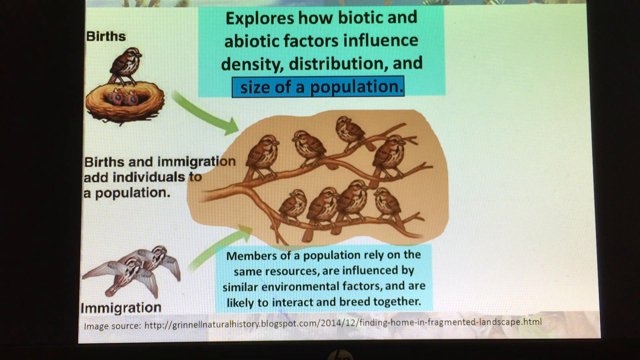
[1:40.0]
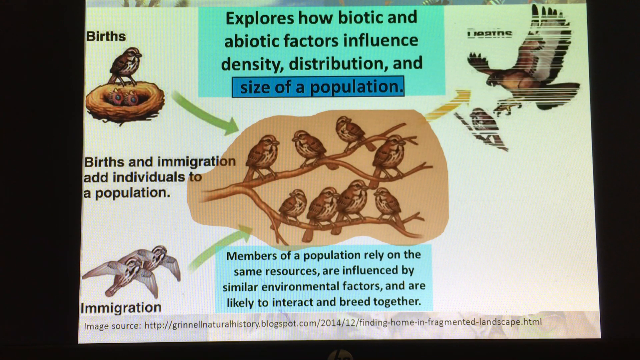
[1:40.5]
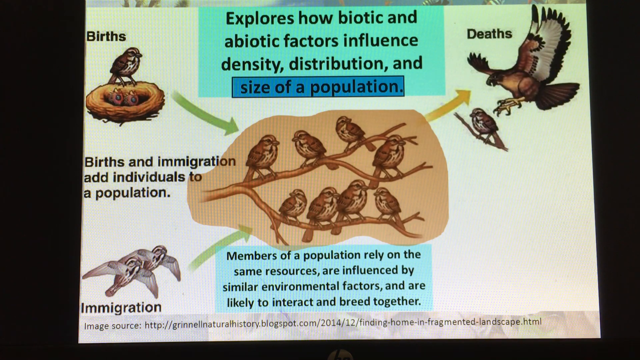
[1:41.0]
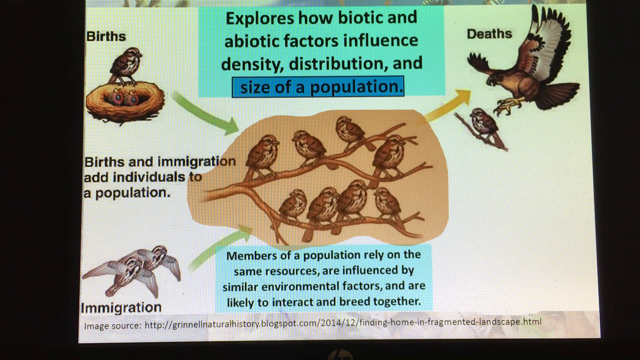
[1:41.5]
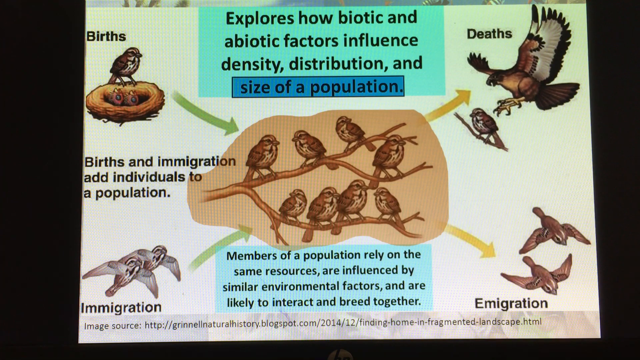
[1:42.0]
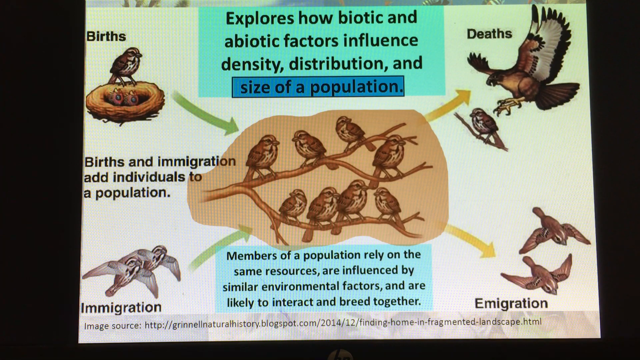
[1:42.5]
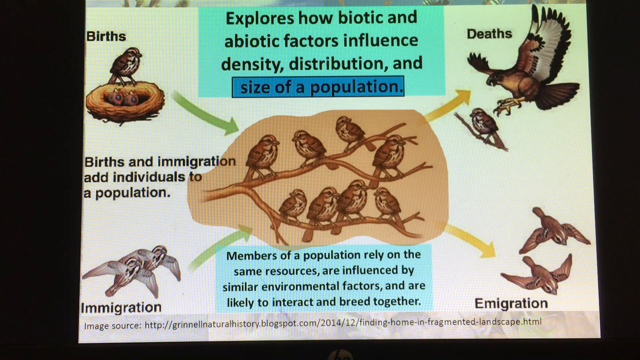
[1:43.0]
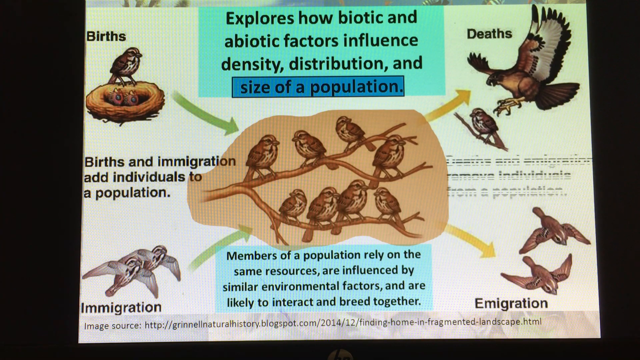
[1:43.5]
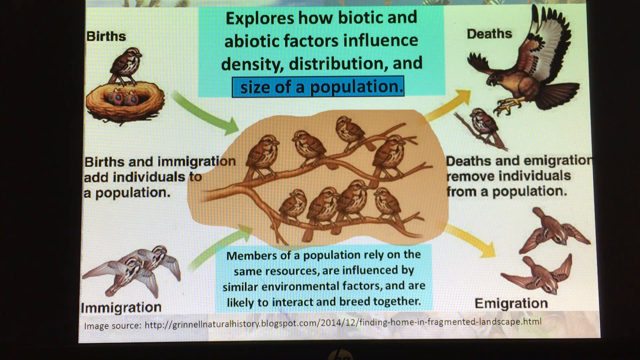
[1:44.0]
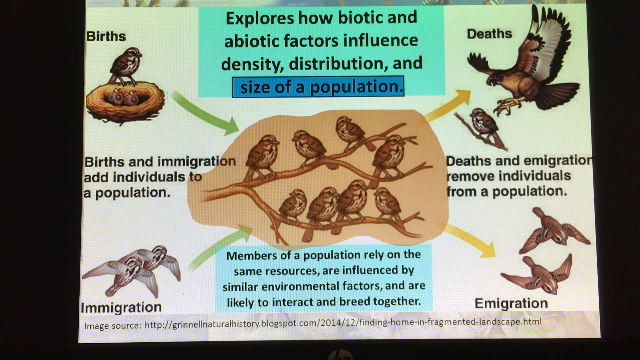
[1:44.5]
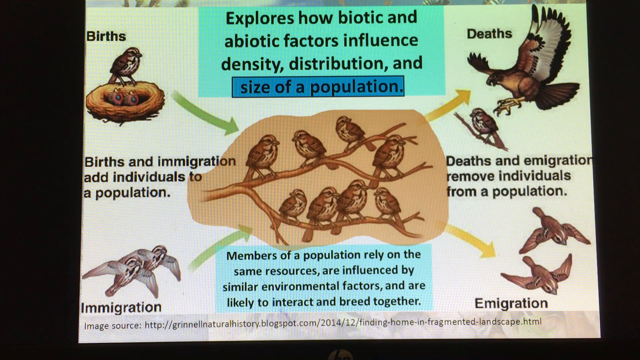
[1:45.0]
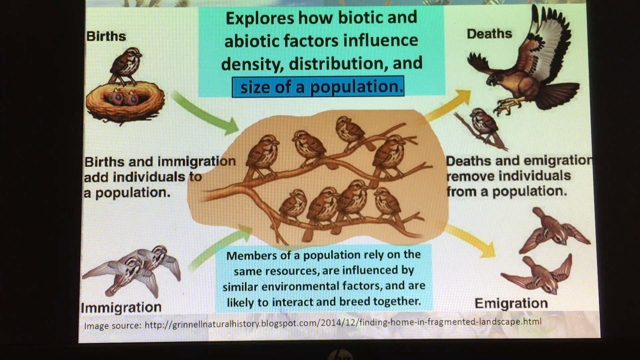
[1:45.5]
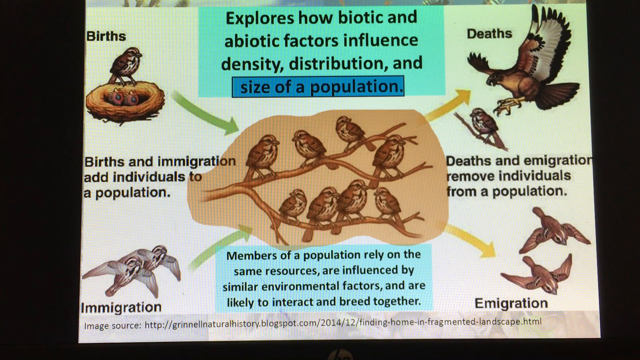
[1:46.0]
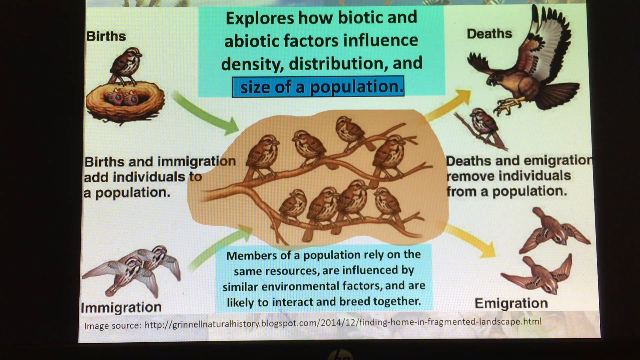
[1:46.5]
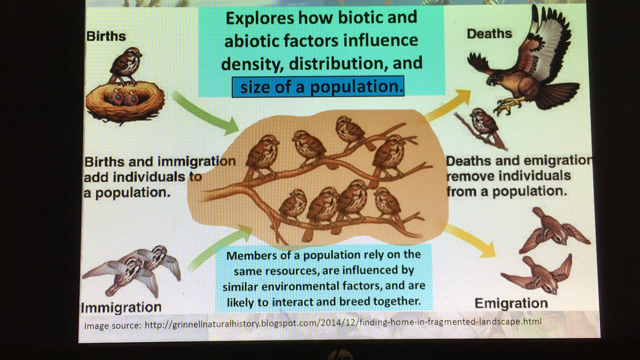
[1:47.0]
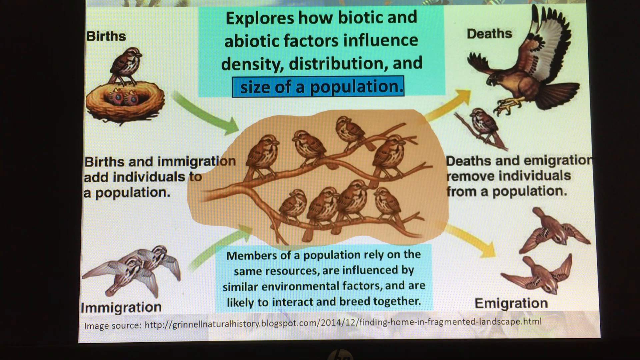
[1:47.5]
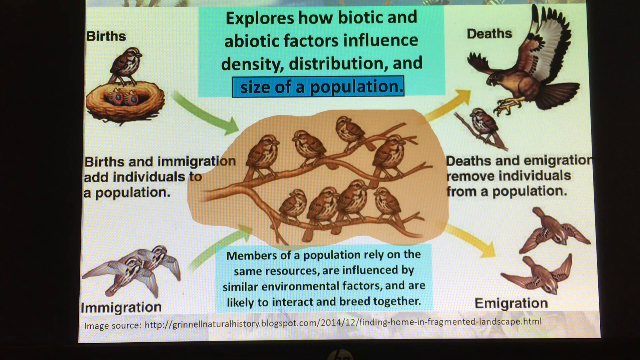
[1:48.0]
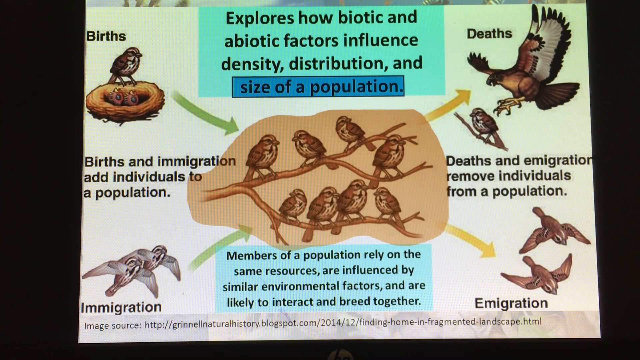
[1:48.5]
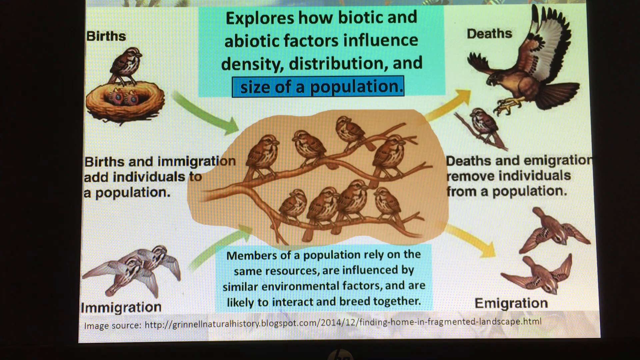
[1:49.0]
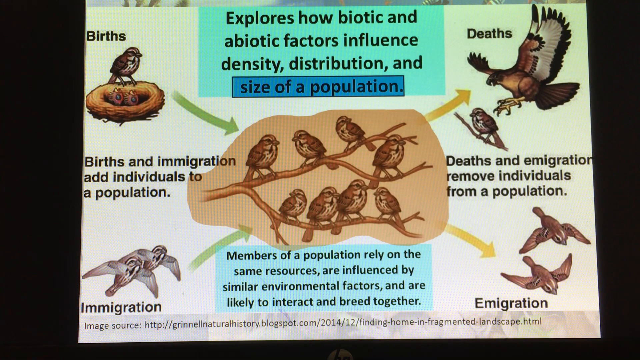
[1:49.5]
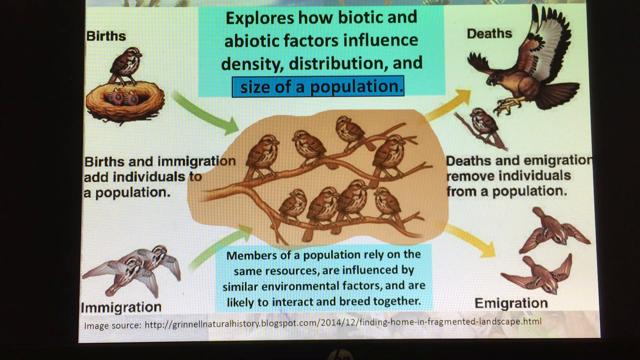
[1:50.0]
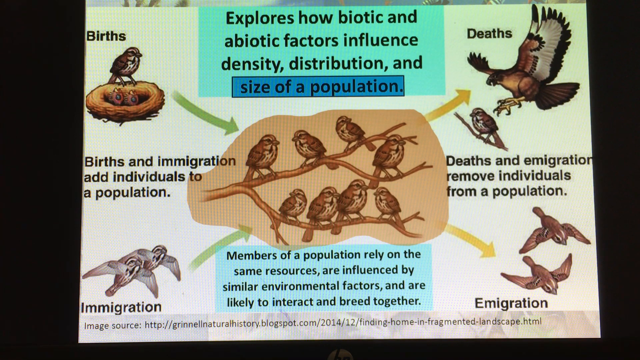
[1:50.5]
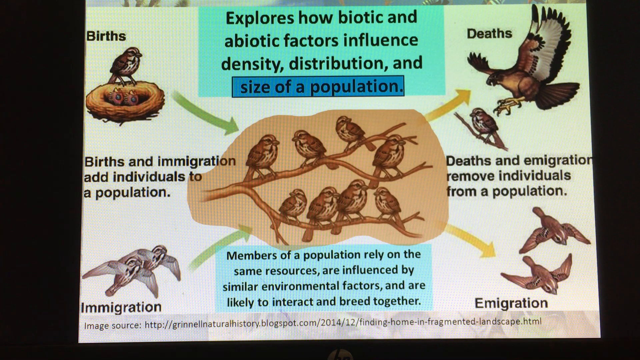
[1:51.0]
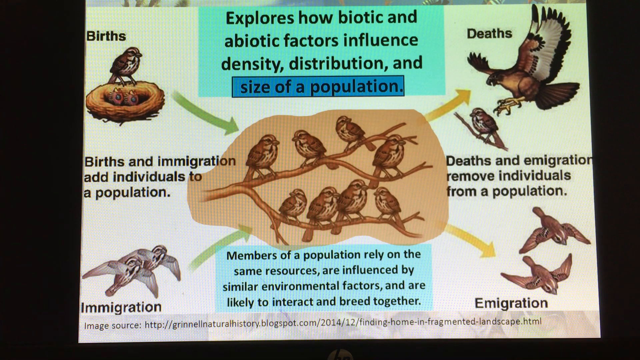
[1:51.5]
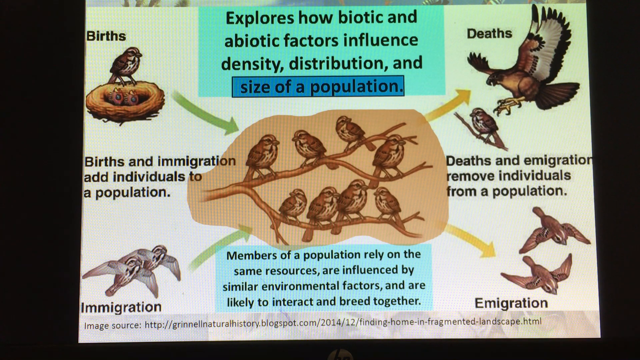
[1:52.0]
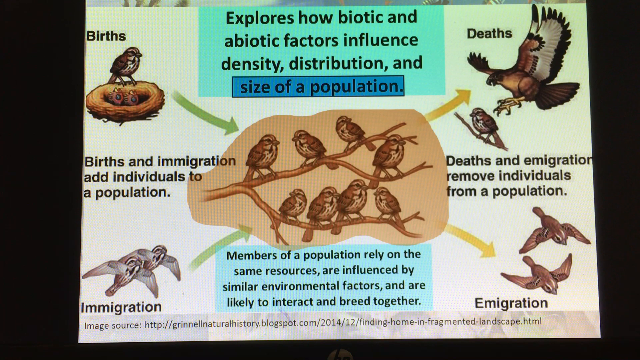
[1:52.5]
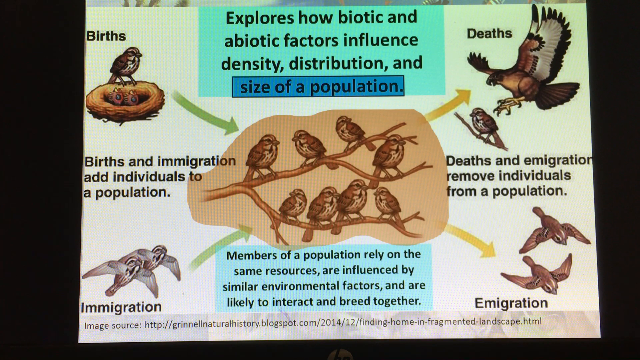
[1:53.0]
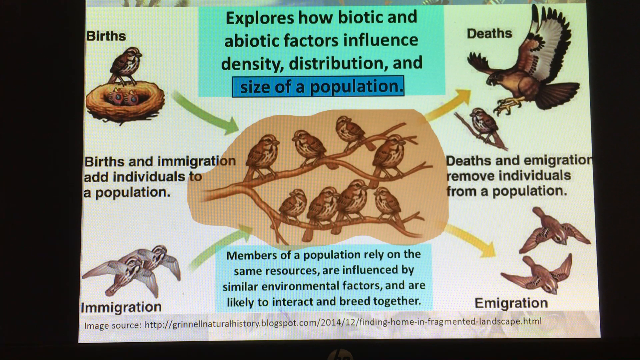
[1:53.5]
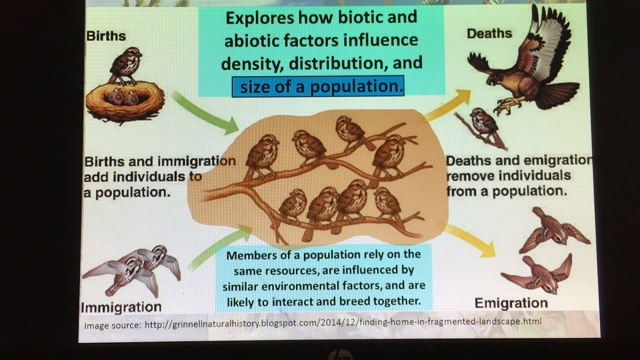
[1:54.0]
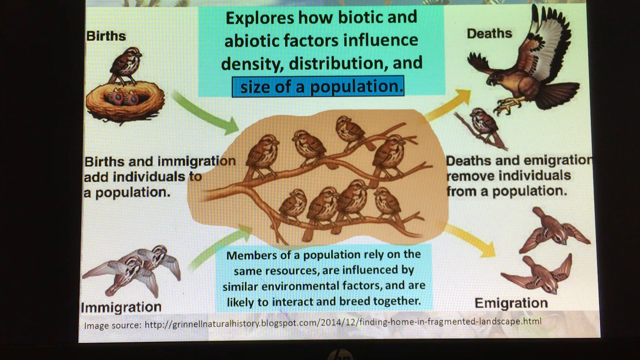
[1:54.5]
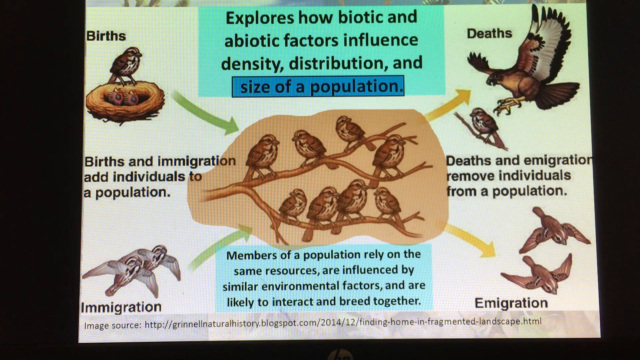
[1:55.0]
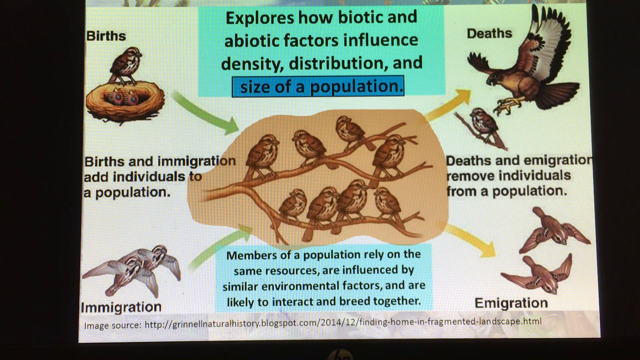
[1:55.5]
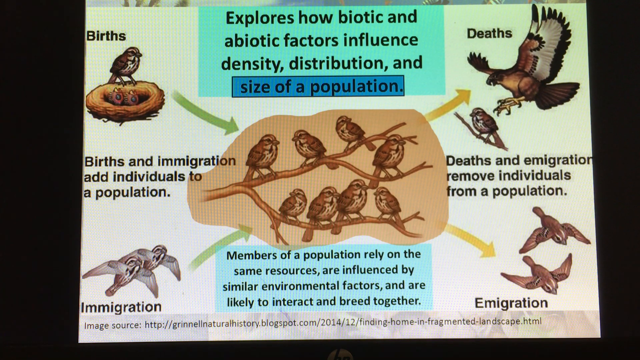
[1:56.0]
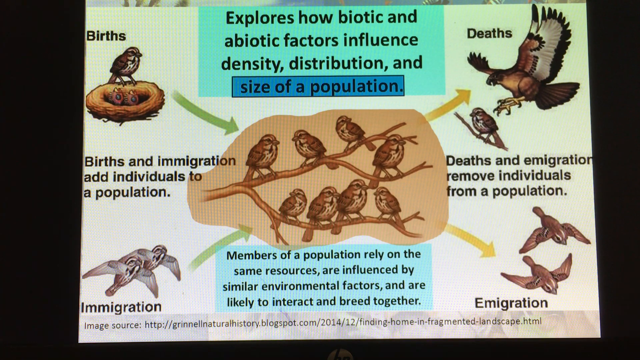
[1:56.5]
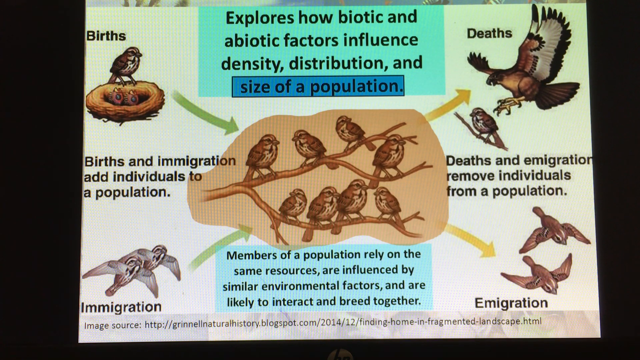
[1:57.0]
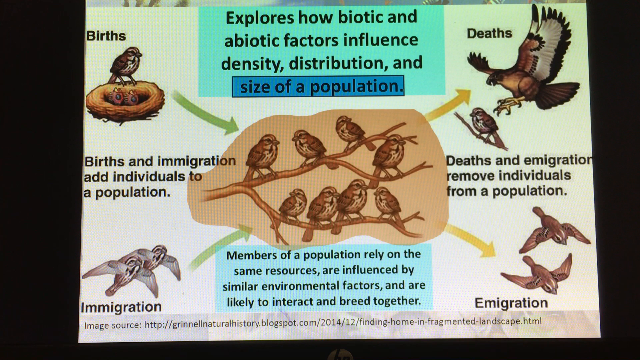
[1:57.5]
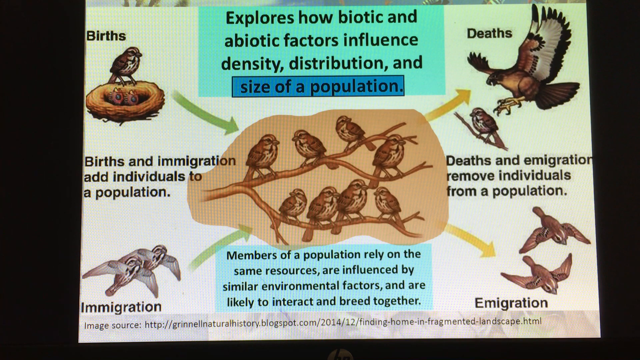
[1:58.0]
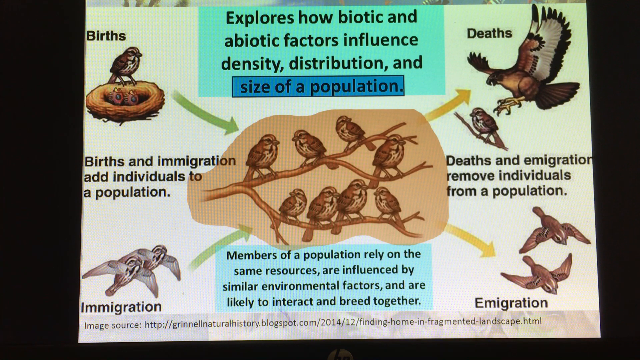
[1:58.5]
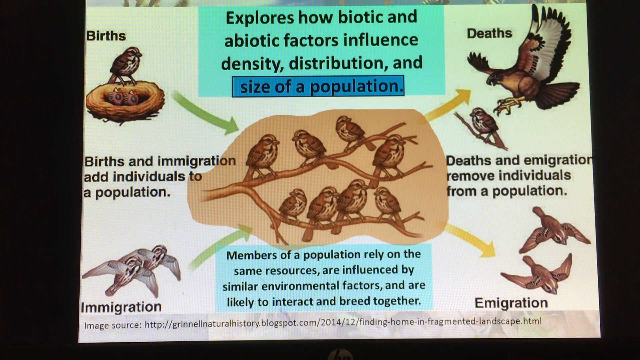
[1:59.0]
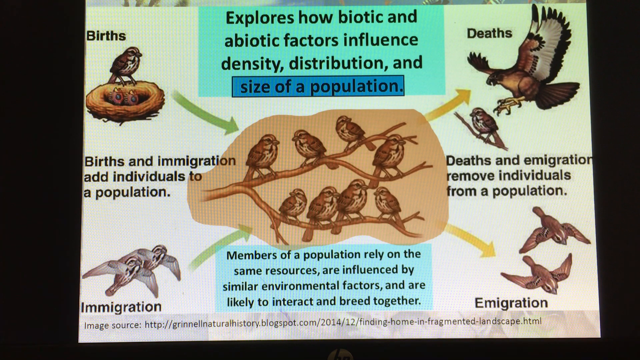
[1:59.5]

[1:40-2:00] The bird population slide continues, with the picture of eight birds in the middle highlighted in brown and the statement "births and immigration add individuals to a population" displayed. Next, a picture of a hawk attacking a small bird appears in the upper left corner, with the word "deaths" above the hawk and a brown arrow pointing out from the eight birds. A picture then appears in the bottom right of a pair of swallows flying away from the picture of the eight birds, with a brown arrow pointing away from the middle picture and the word "emigration." A sentence then appears to the right of the bird picture: "deaths and emigration remove individuals from population."